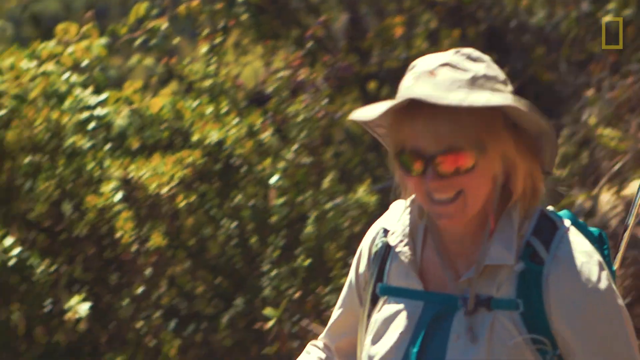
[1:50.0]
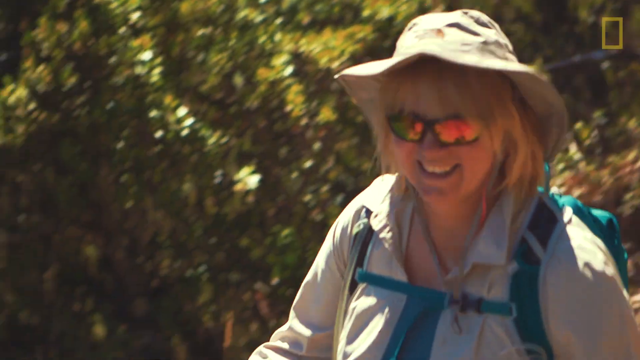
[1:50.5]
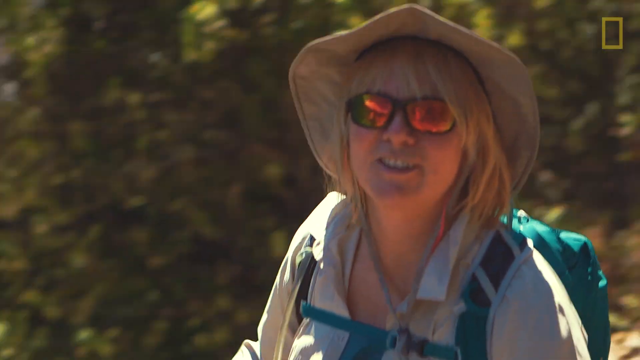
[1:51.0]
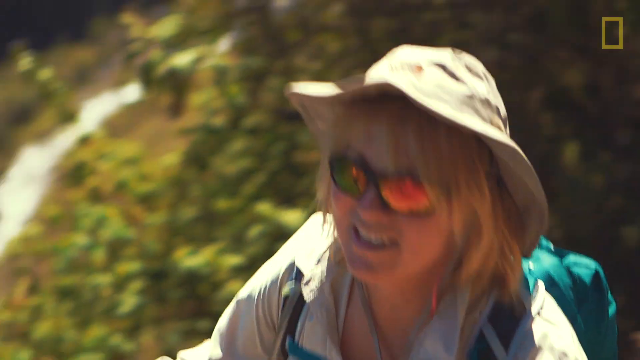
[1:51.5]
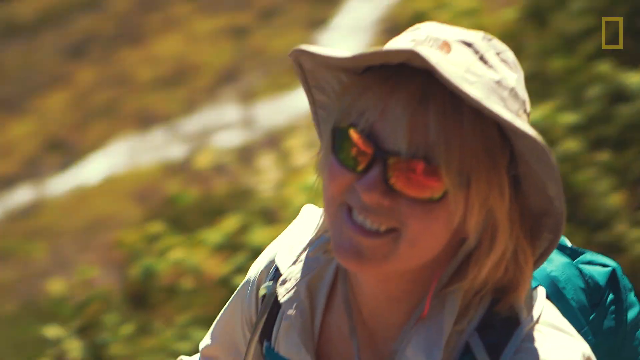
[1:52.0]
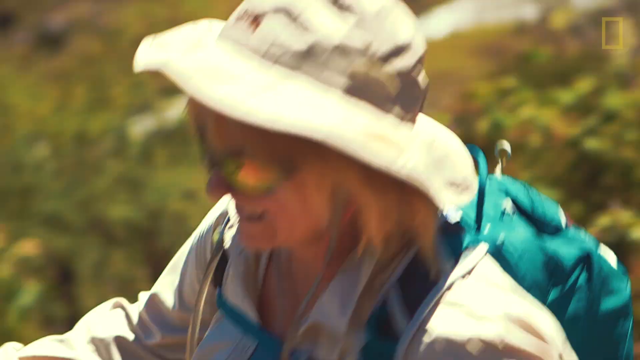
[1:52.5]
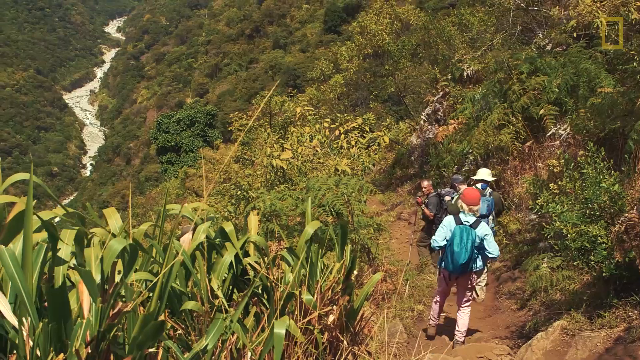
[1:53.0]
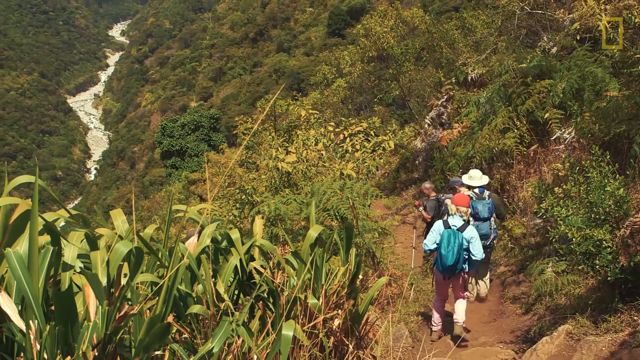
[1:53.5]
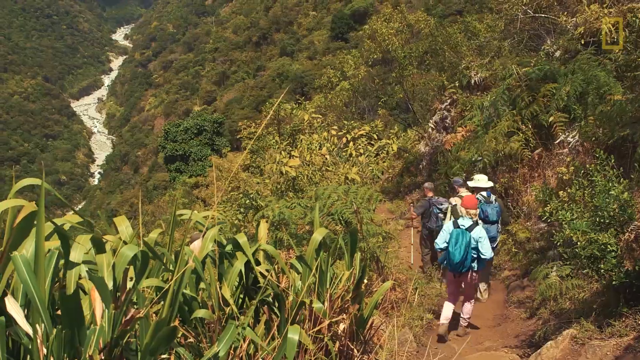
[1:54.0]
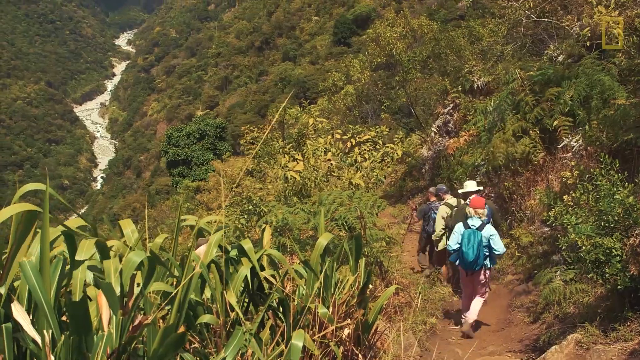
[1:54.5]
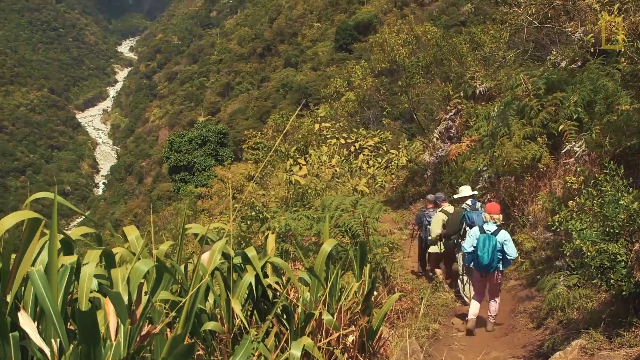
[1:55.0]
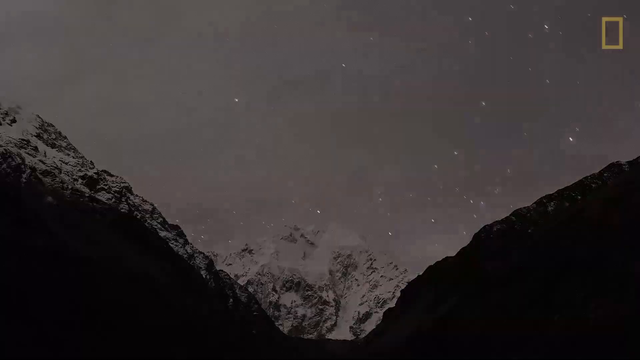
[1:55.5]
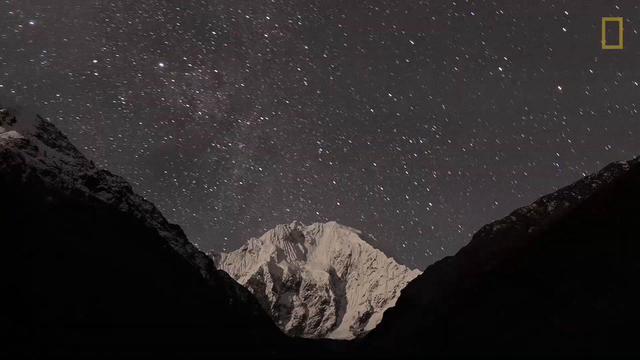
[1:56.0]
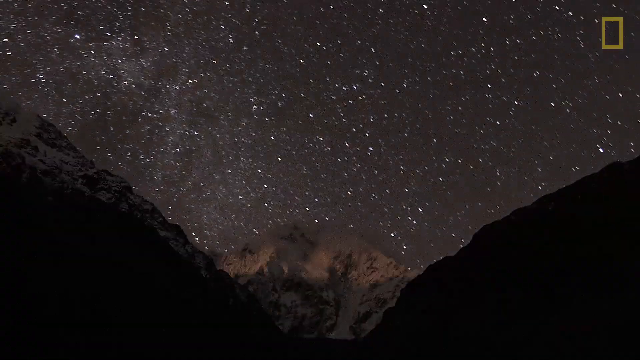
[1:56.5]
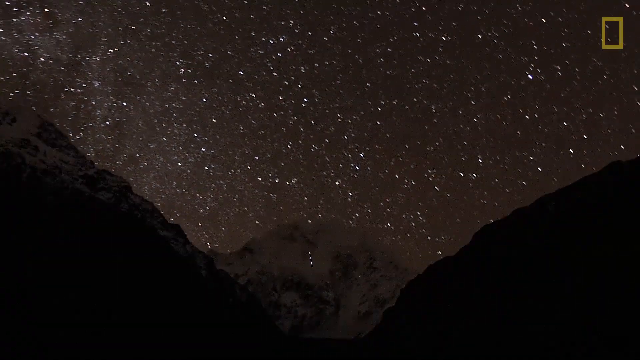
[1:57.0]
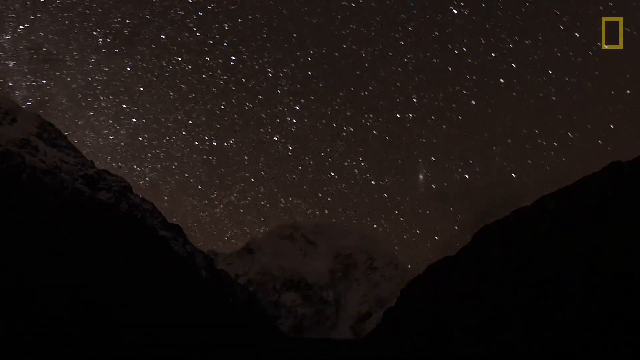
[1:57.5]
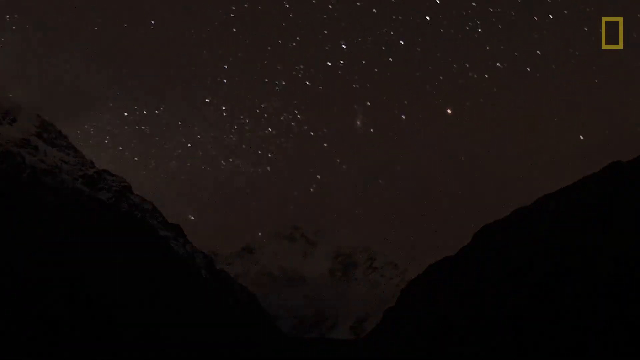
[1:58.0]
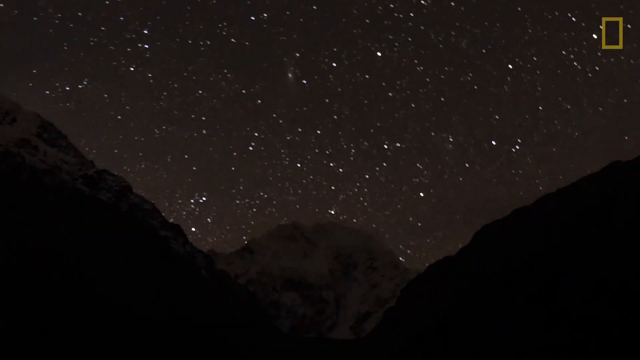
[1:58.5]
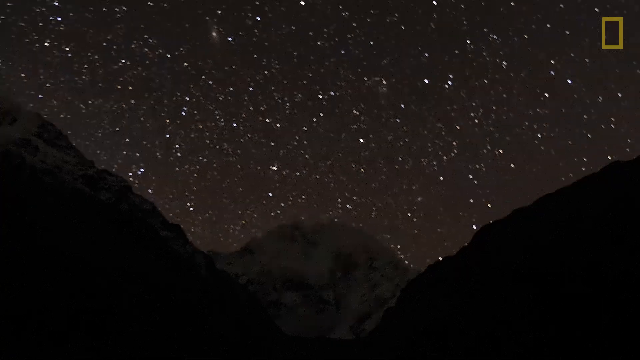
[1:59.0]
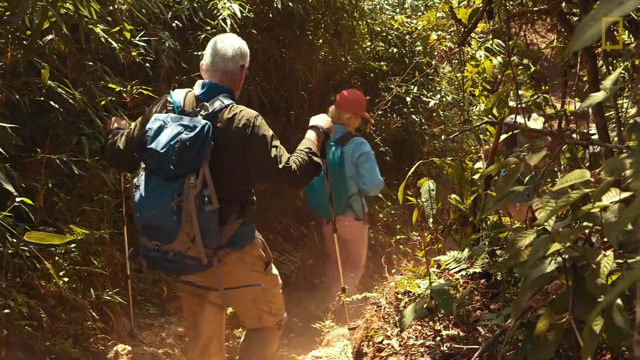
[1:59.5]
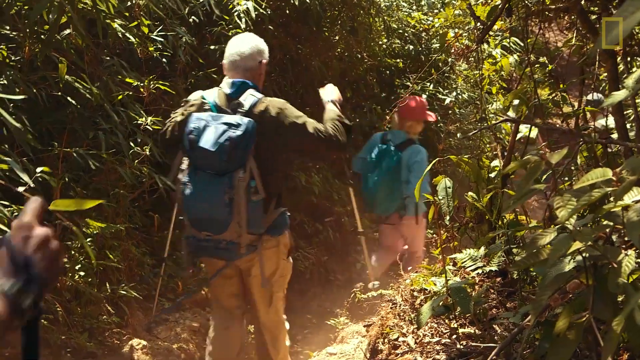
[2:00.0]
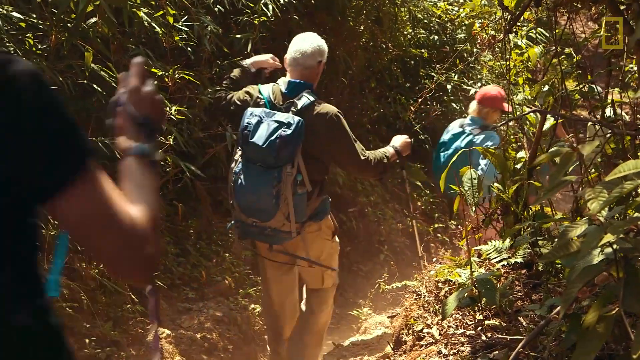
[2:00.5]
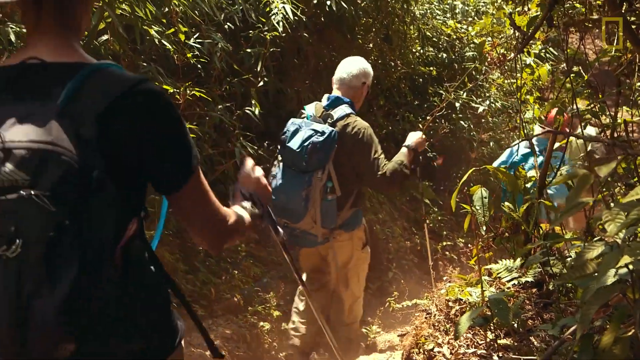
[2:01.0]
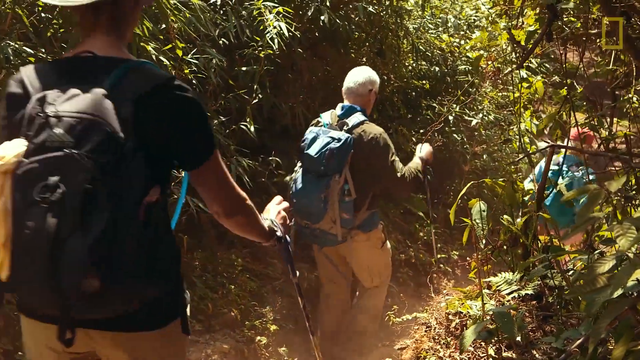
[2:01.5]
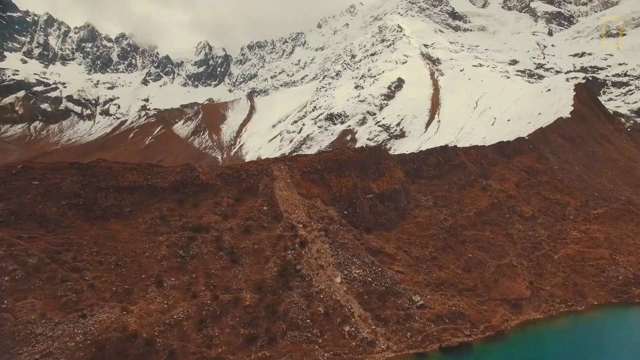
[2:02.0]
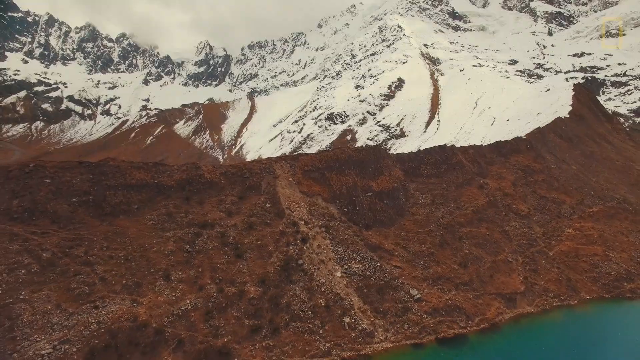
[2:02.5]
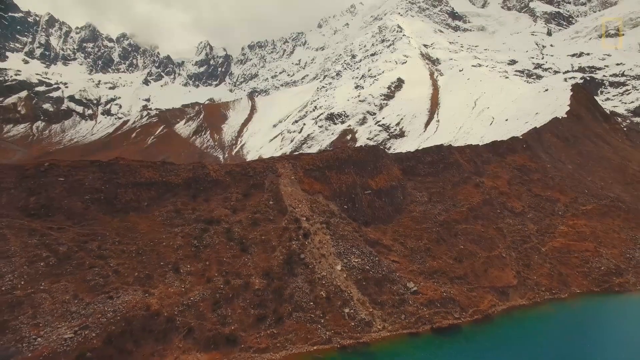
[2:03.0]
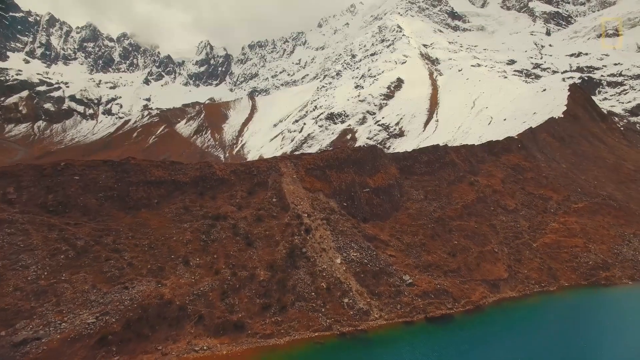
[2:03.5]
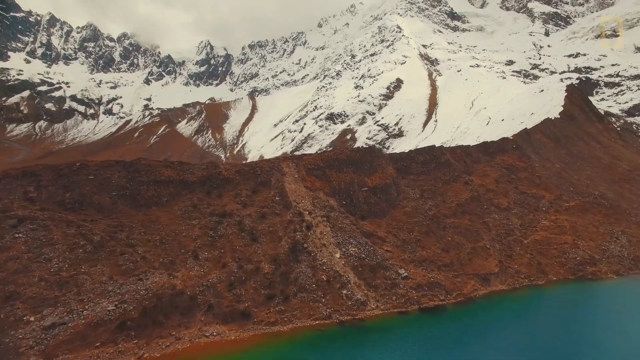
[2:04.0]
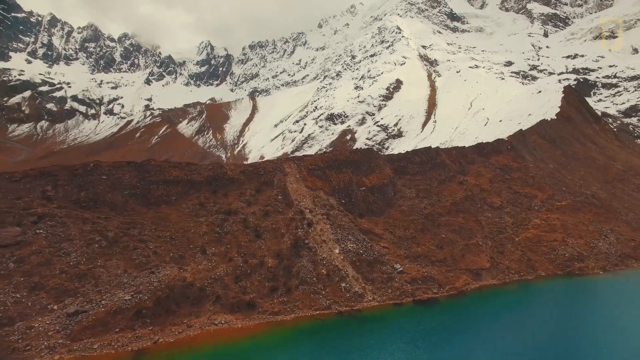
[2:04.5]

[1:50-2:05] The camera follows one particular hiker, a blonde woman in a floppy brimmed hat and hiking boots, carrying a kind of teal-colored pack that looks more like a day pack than a backpack. They walk along a well-defined but narrow trail through what really looks like jungle, roughly a one-person trail where maybe two could pass. From higher up at another place, the view looks down into a very green river valley with very lush vegetation. The view pans out from a little higher up to show an aqua-colored lake with brown hills around it and snow-covered mountains in the background. The scene then changes to a view at night, looking up through several mountain peaks at the Milky Way. Between two peaks a white mountain stands, with the Milky Way swirling around it. Thousands of stars fill the night sky and seem to move in time-lapse photography.